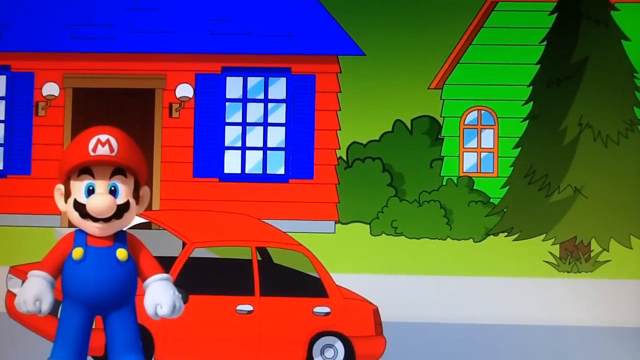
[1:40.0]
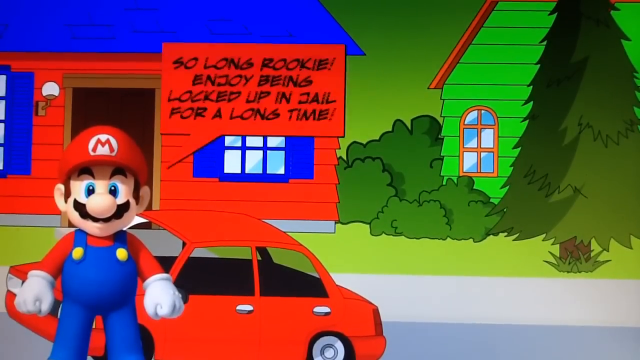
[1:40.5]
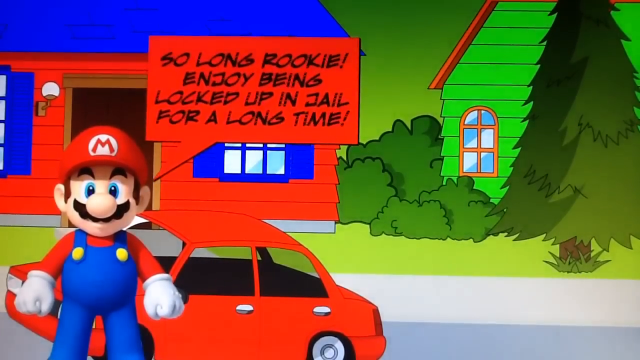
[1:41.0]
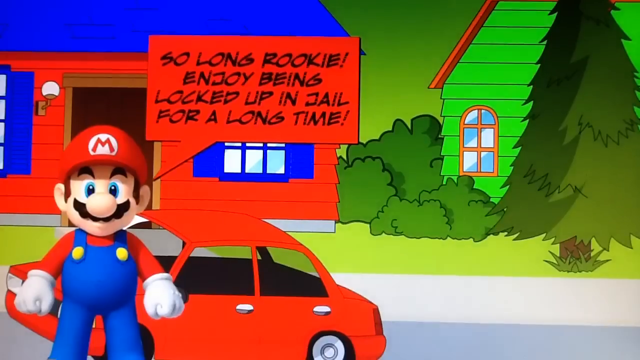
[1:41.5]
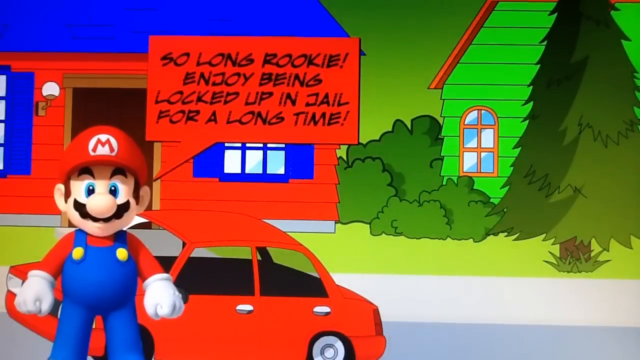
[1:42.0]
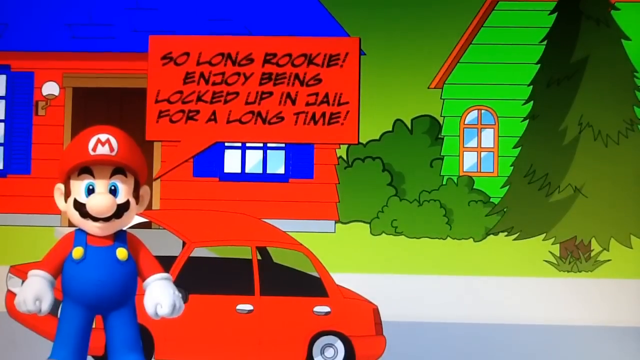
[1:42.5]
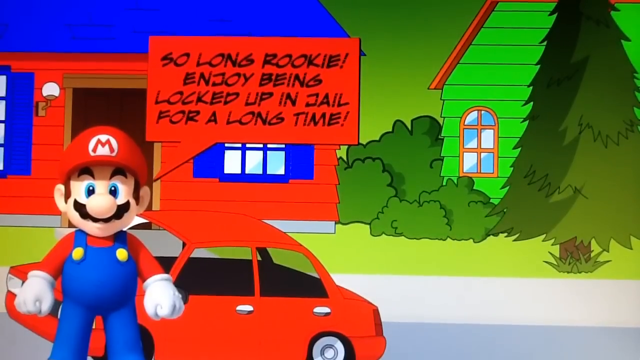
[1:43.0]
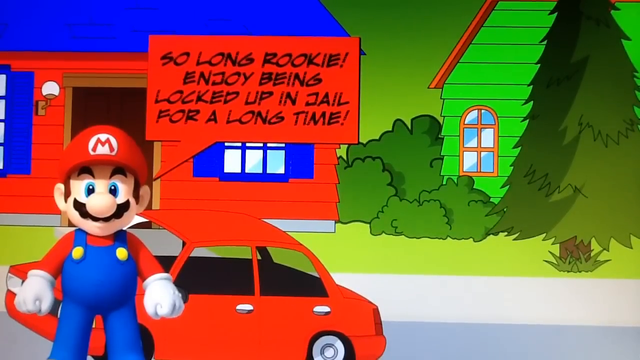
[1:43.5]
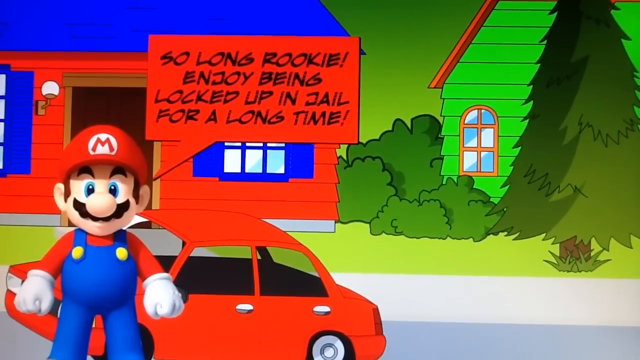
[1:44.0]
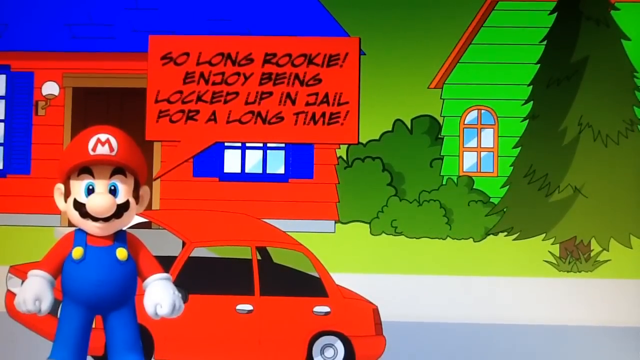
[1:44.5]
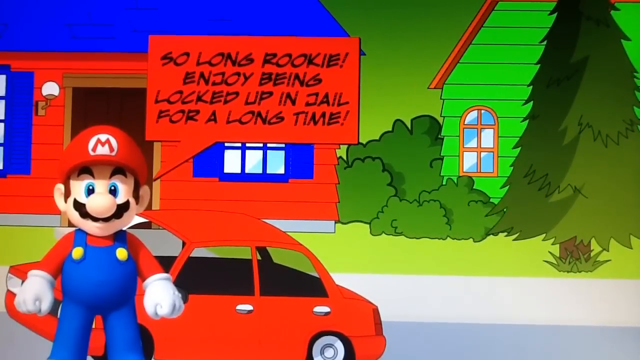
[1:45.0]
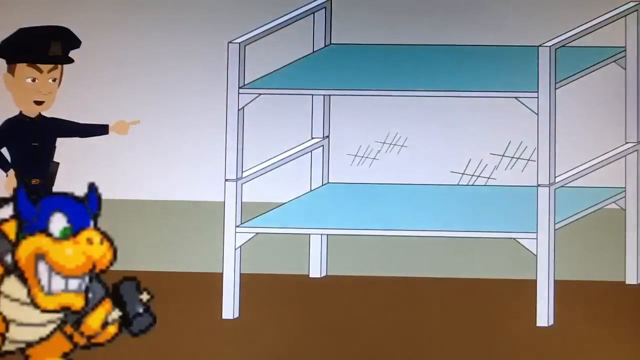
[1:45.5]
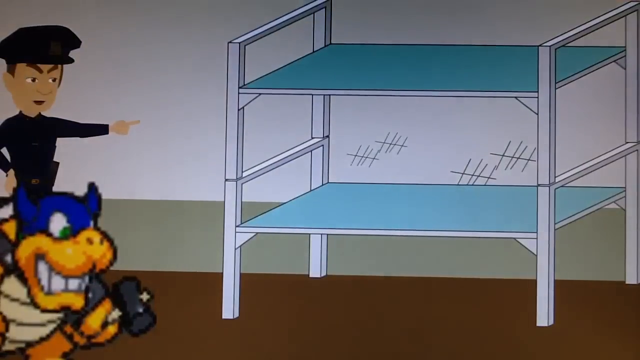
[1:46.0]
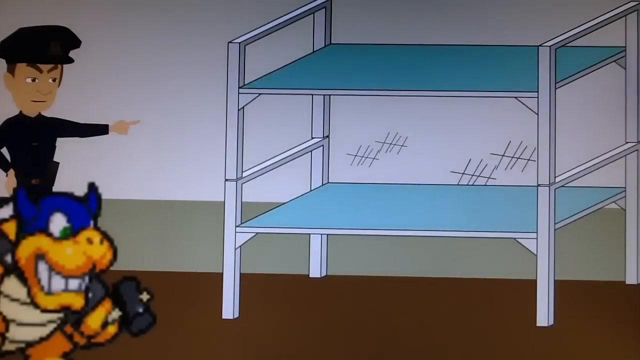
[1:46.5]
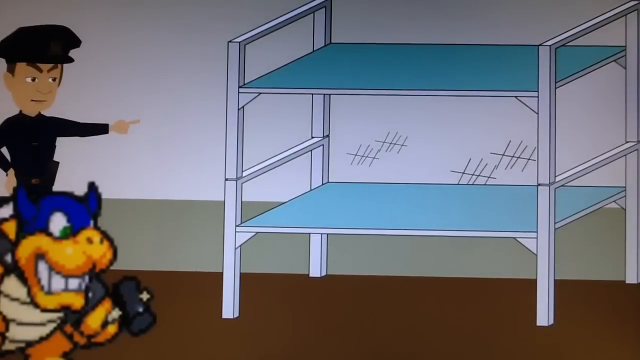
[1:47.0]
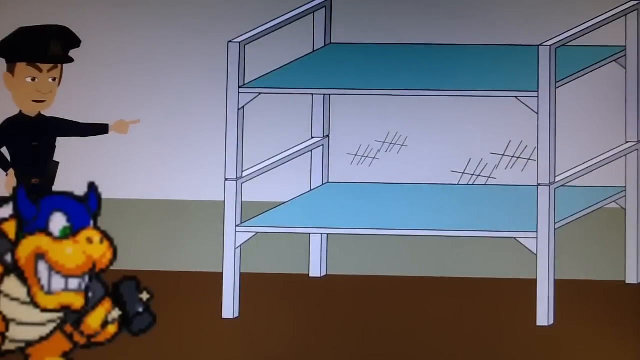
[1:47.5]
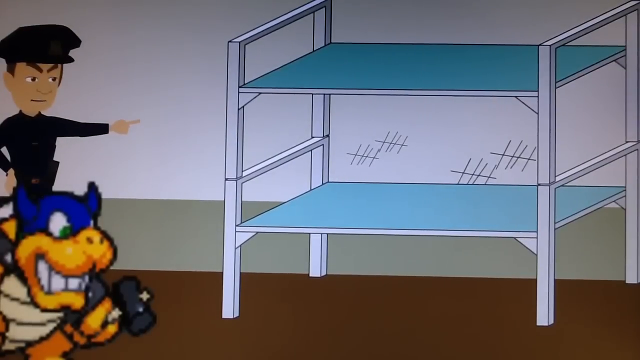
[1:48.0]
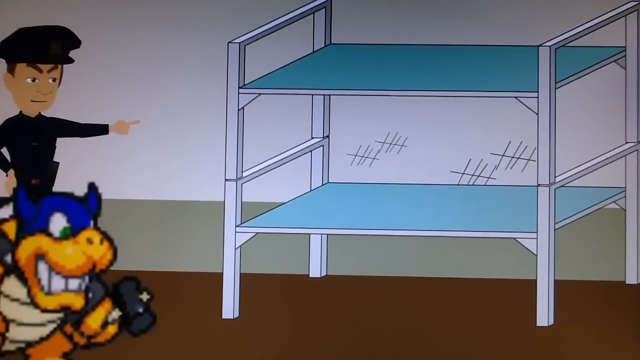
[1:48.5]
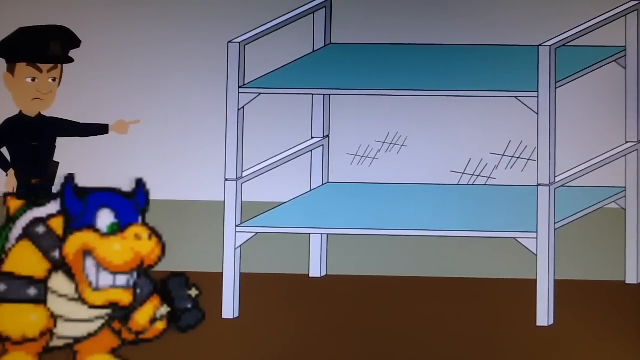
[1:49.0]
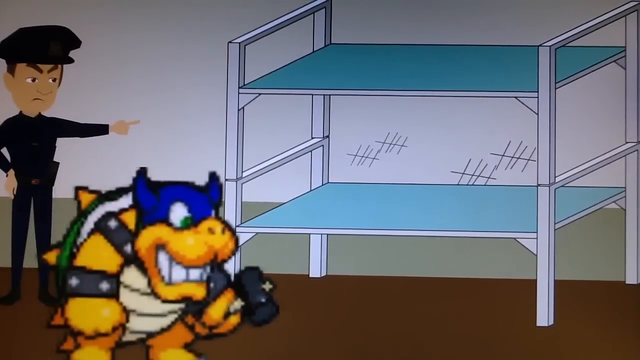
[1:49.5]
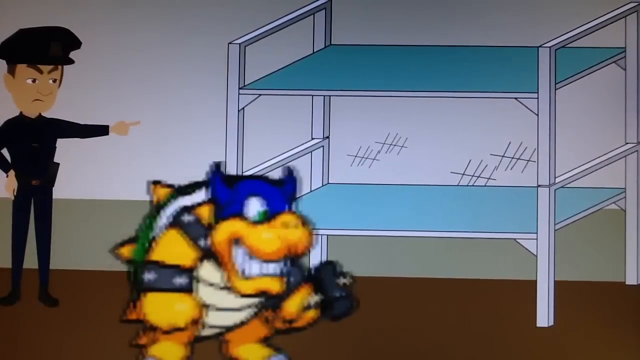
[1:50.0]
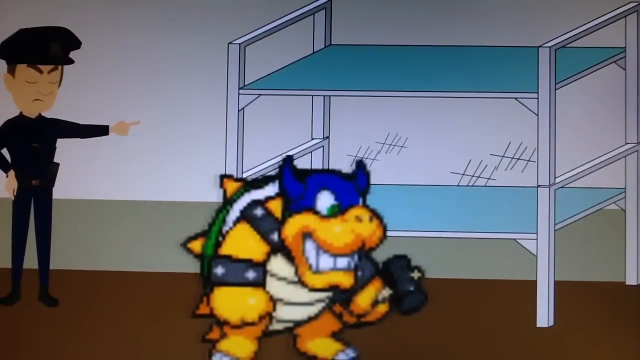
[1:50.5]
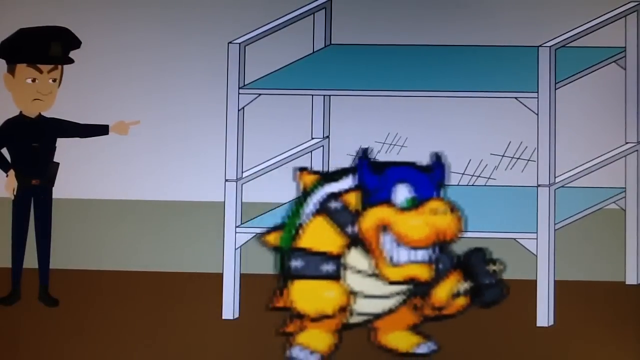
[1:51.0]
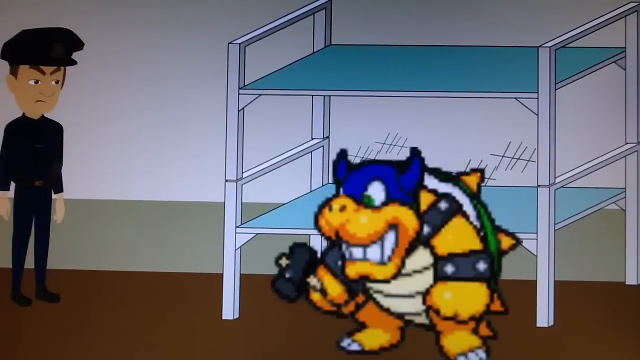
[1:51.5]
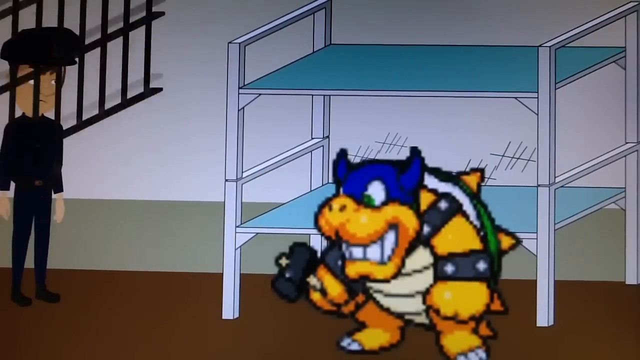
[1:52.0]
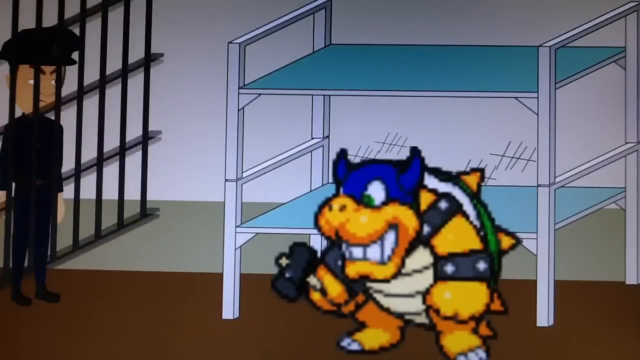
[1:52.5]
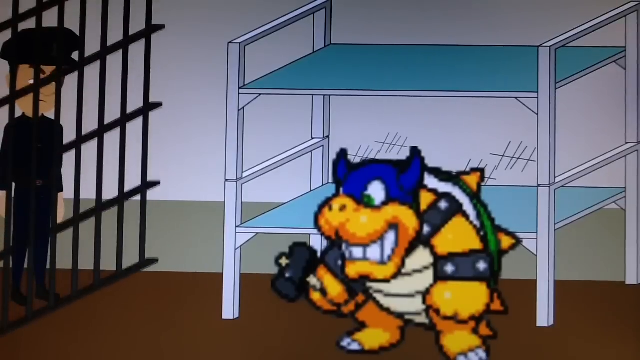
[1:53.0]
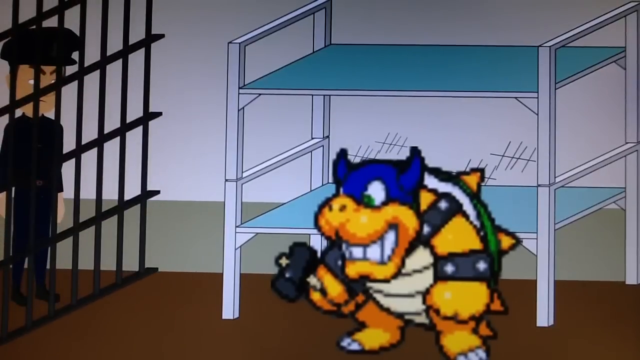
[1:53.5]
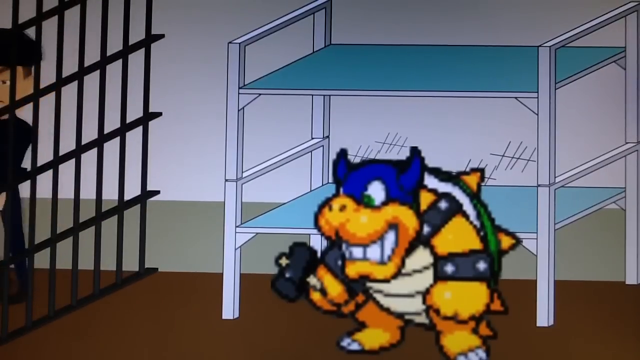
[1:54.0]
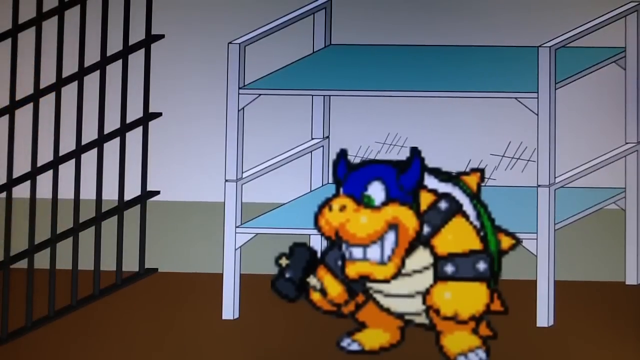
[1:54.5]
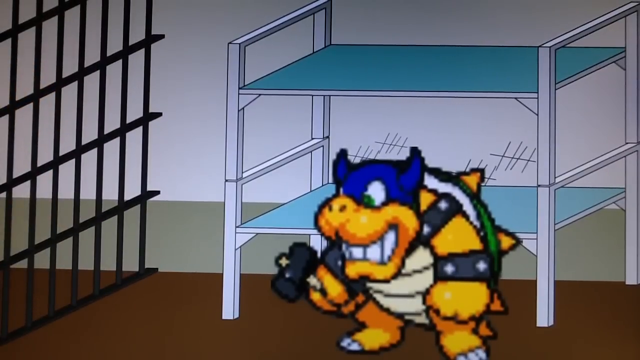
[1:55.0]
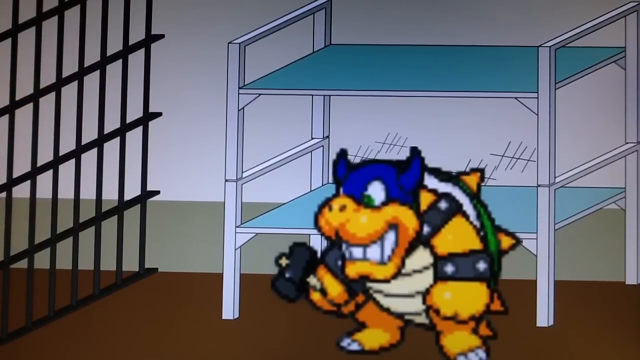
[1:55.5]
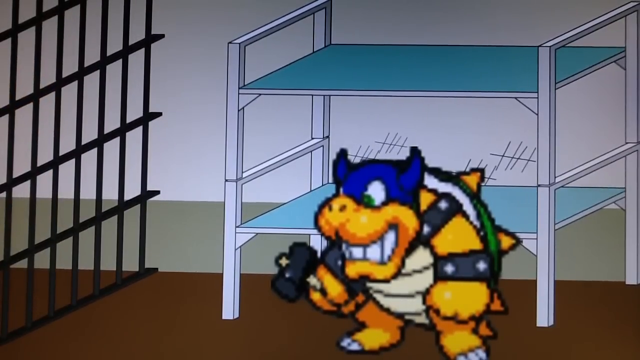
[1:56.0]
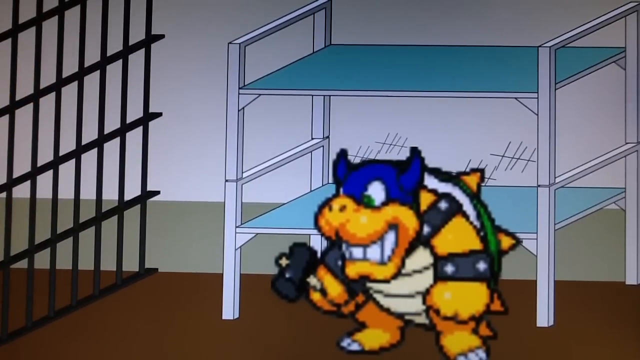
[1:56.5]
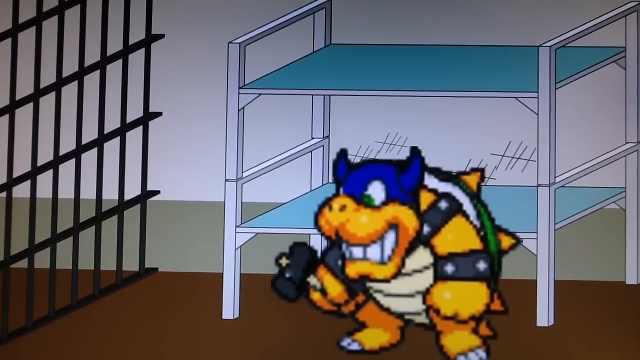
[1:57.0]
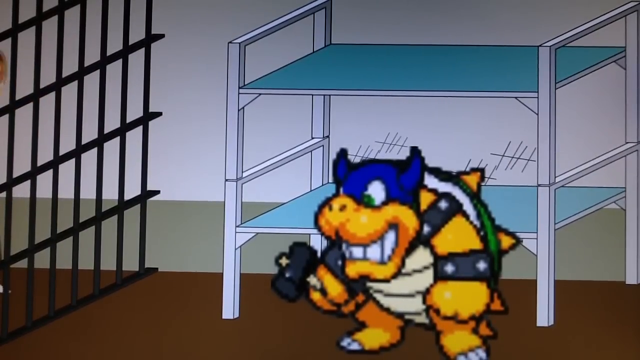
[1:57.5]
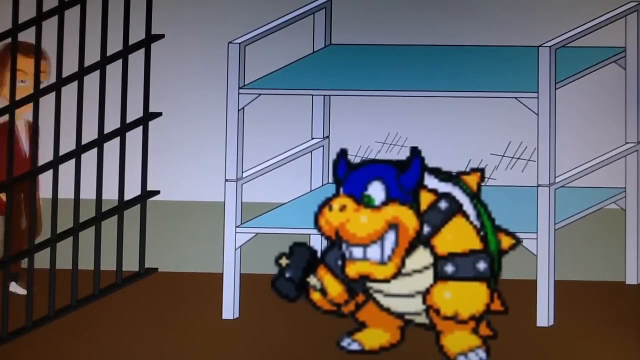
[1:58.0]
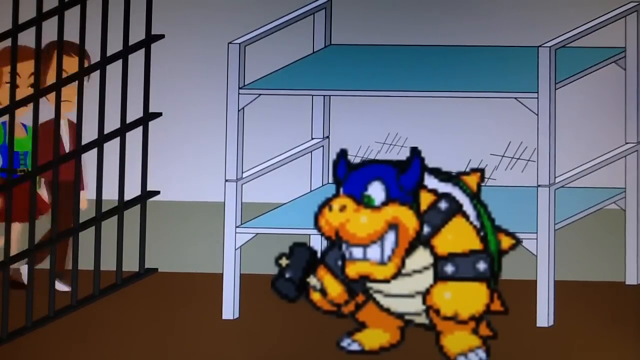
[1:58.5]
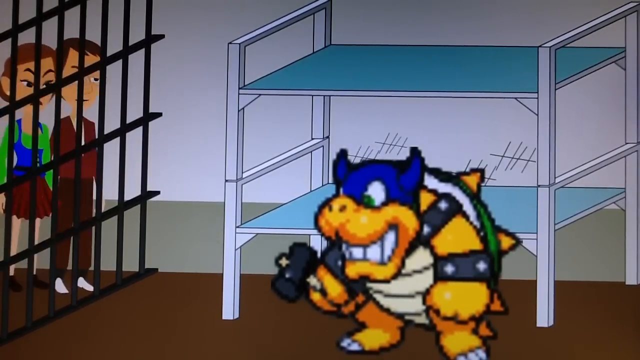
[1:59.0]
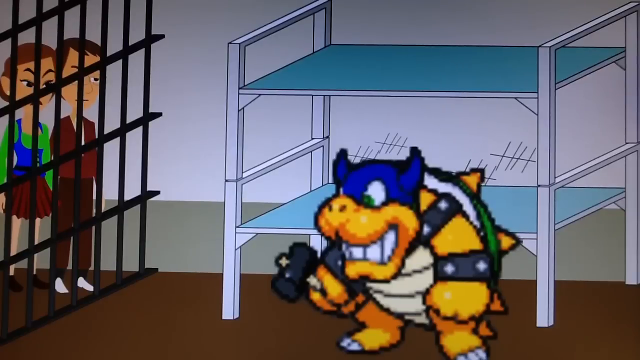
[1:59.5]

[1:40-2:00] Mario is standing outside in front of his red sedan, and another red square call-out appears that says, "So long, Rookie. Enjoy being locked up in jail for a long time." The scene changes to a jail. Rookie wears the same outfit, with the blue mask on the top part of his head and his horns underneath, his hammer in his left hand, and the same grimace. The police officer, in the same uniform, is standing behind him and points to a bunk bed on the right-hand side. The bunk bed has a white frame and blue beds, with no pillows or blankets. On the wall are hash marks in sets of five, adding up to 5, 10, 15, 20, apparently representing a previous prisoner counting out their days. The officer points to Rookie, who walks inside and stands in front of the bunk beds. A gate of cell bars comes down from the ceiling to the floor between Rookie and the officer, and the officer turns to the left and leaves. At the end of the scene, two people walk in and stand outside the gate.